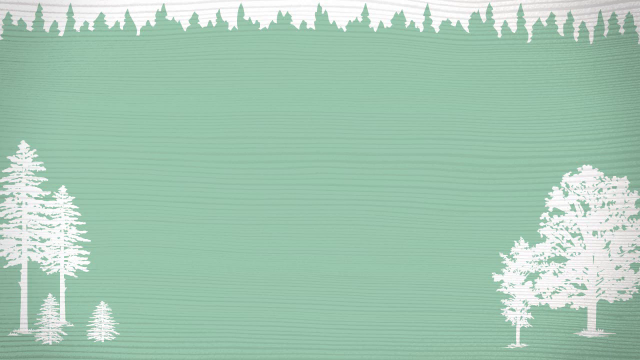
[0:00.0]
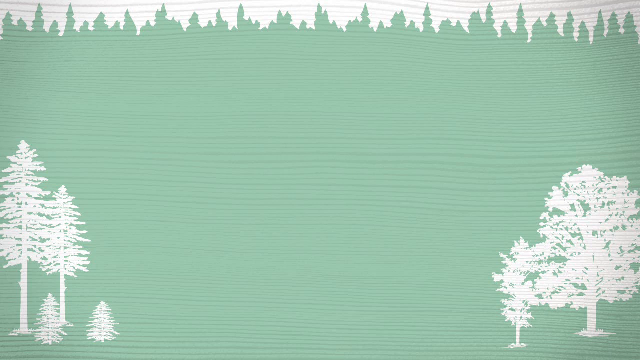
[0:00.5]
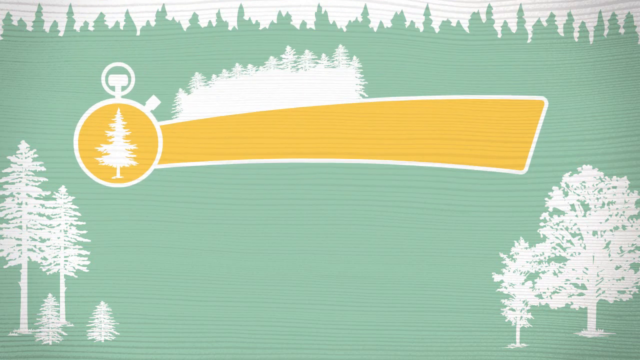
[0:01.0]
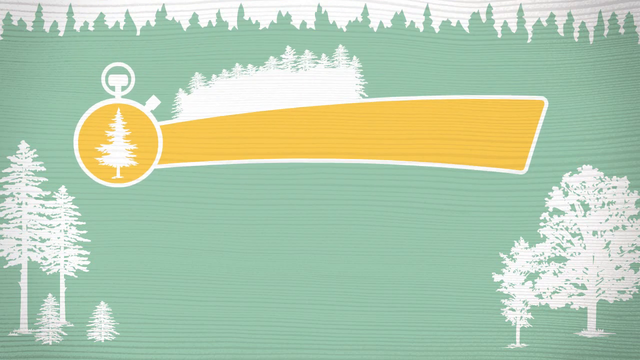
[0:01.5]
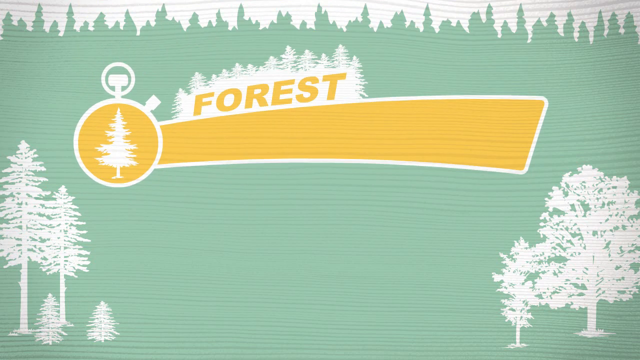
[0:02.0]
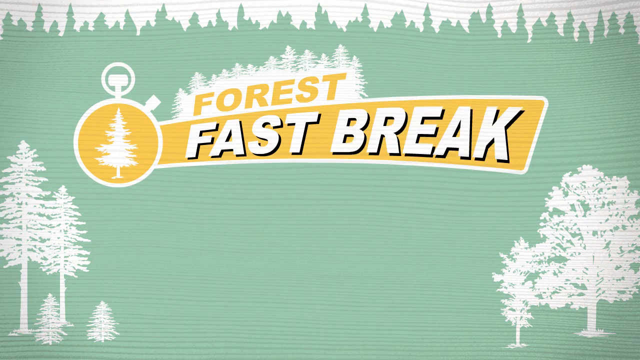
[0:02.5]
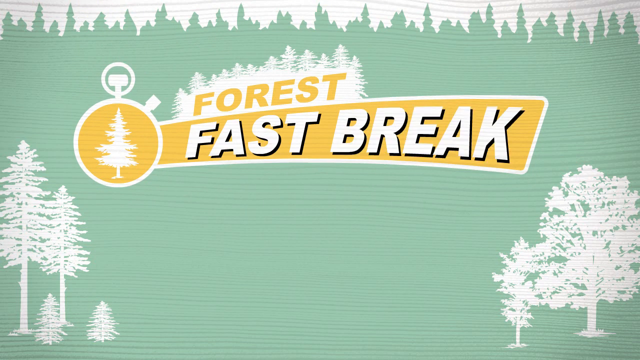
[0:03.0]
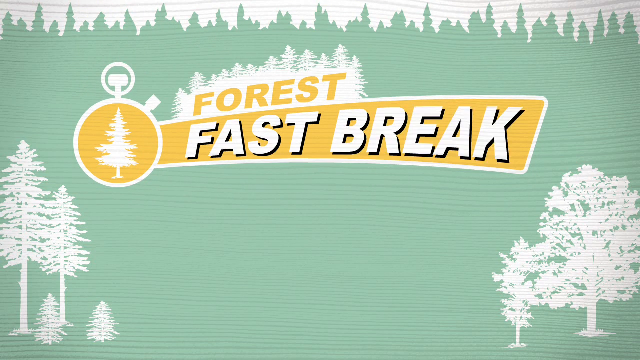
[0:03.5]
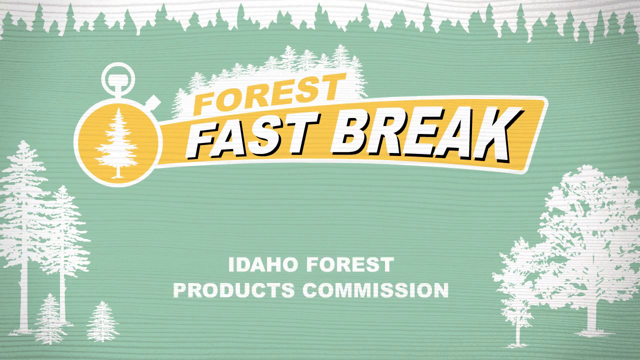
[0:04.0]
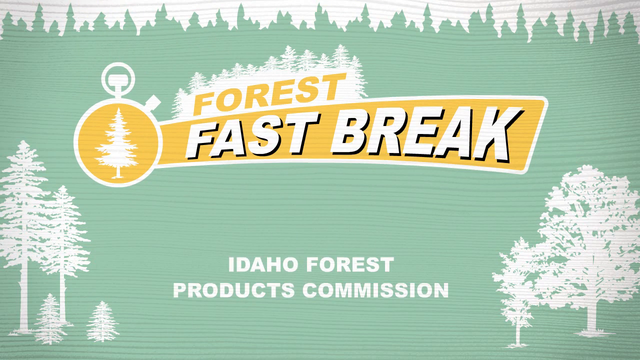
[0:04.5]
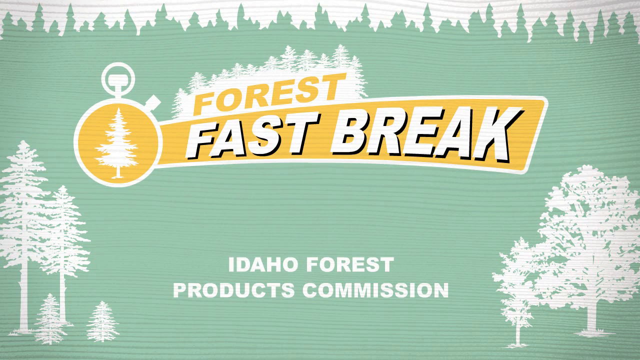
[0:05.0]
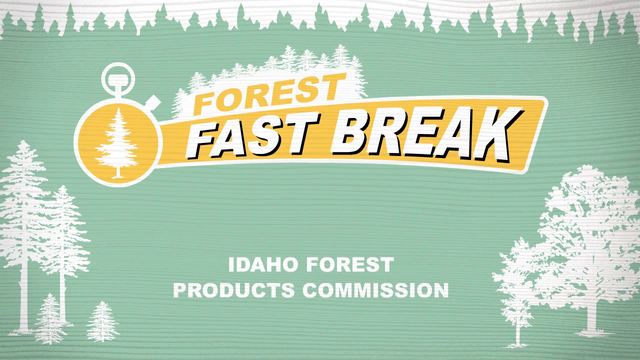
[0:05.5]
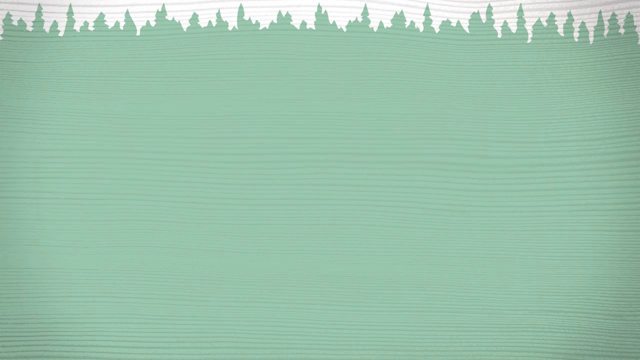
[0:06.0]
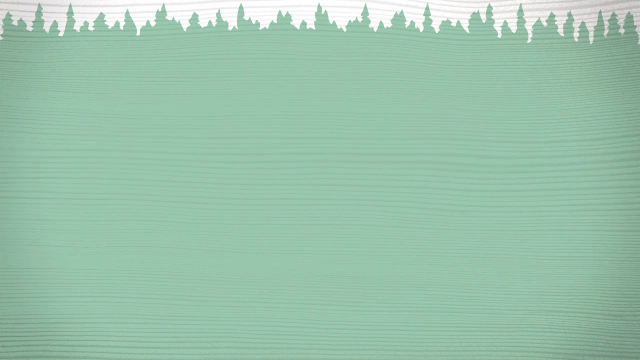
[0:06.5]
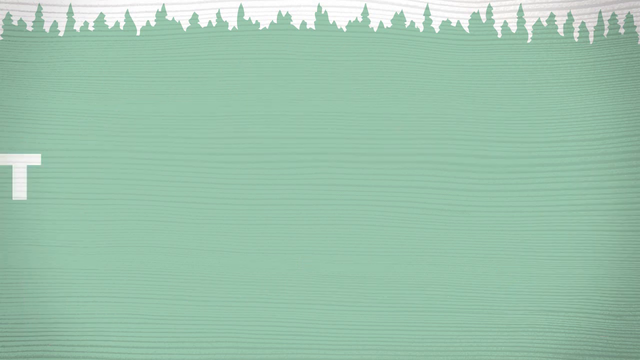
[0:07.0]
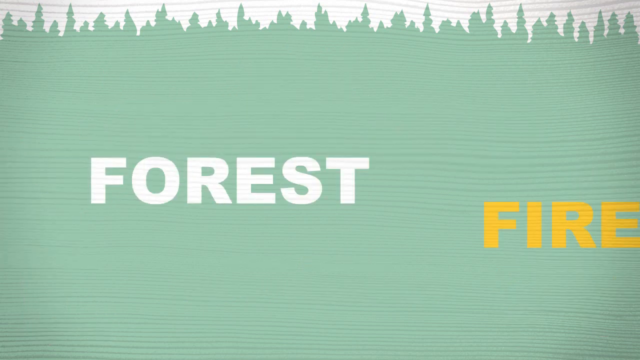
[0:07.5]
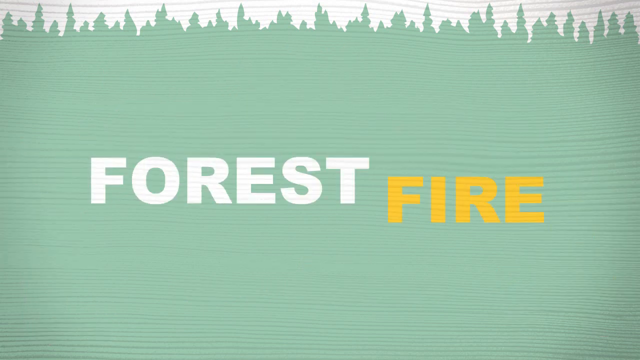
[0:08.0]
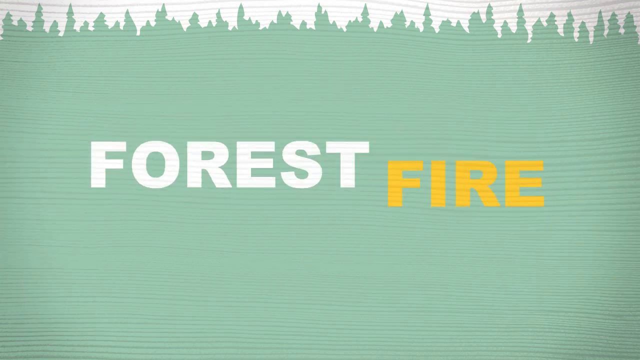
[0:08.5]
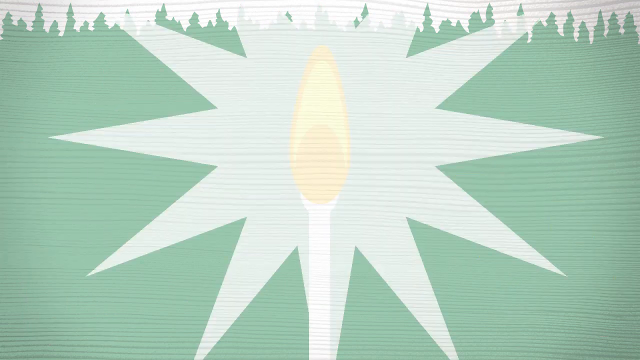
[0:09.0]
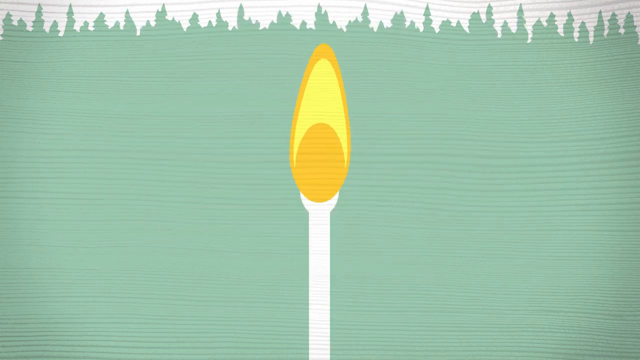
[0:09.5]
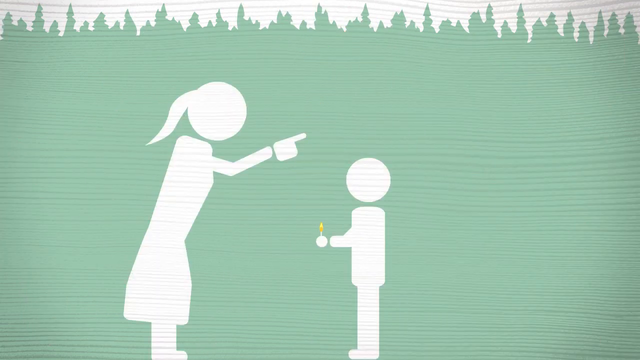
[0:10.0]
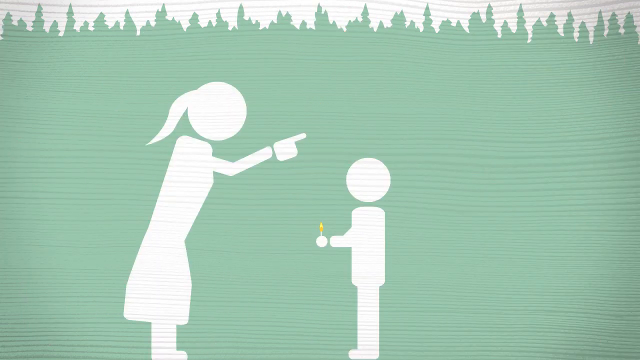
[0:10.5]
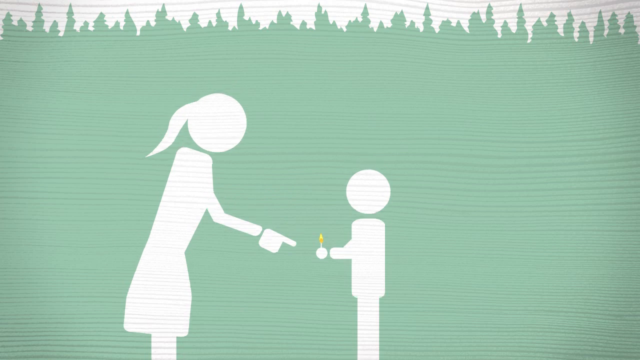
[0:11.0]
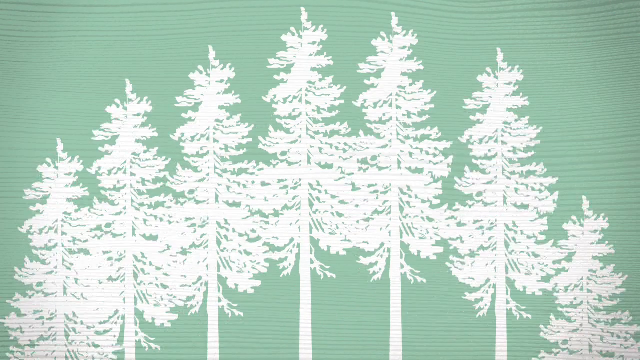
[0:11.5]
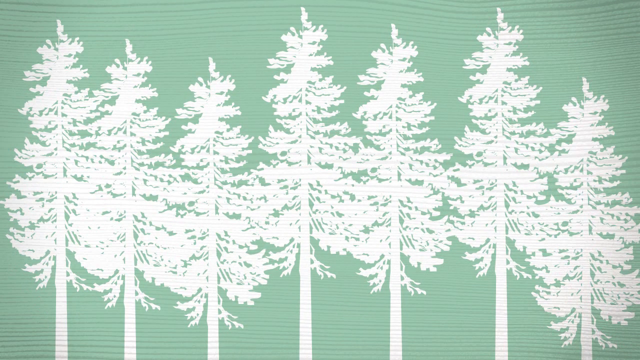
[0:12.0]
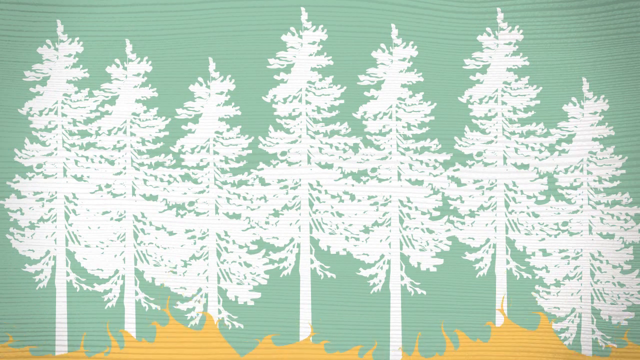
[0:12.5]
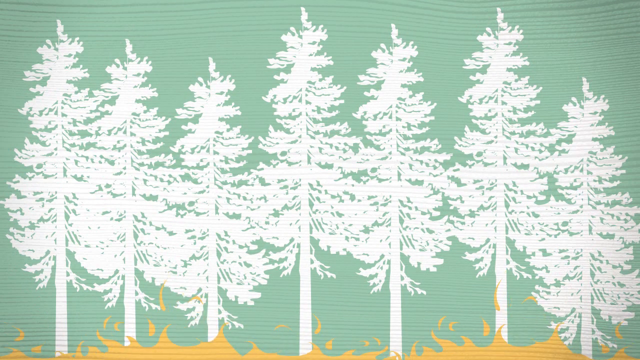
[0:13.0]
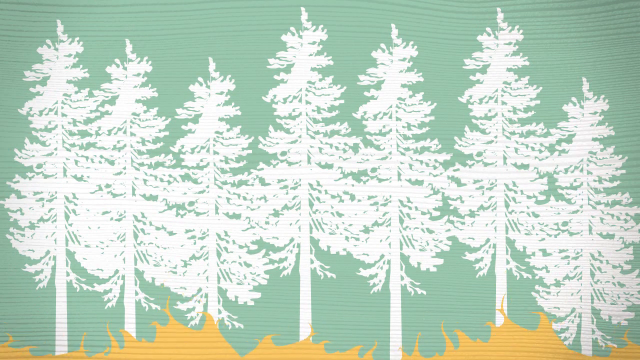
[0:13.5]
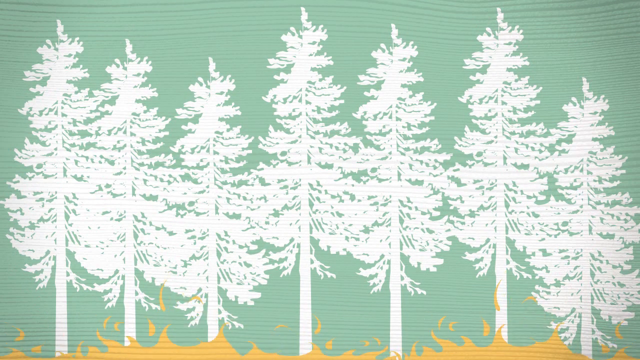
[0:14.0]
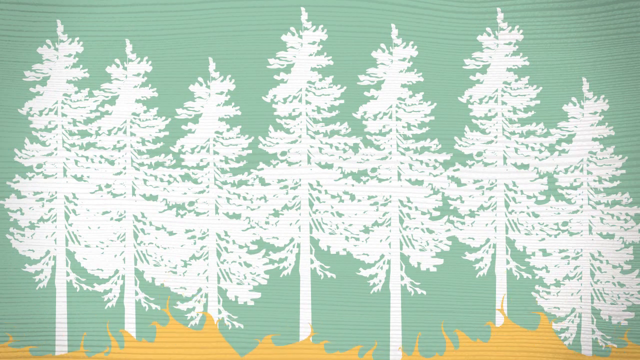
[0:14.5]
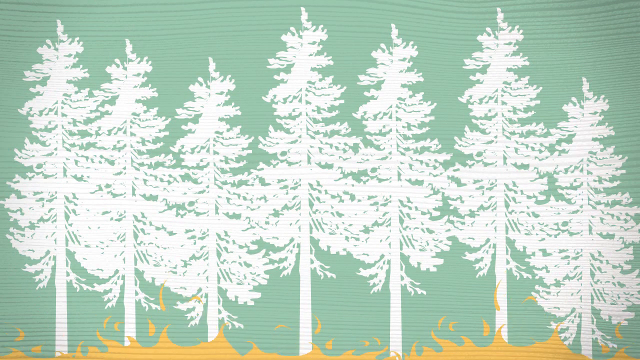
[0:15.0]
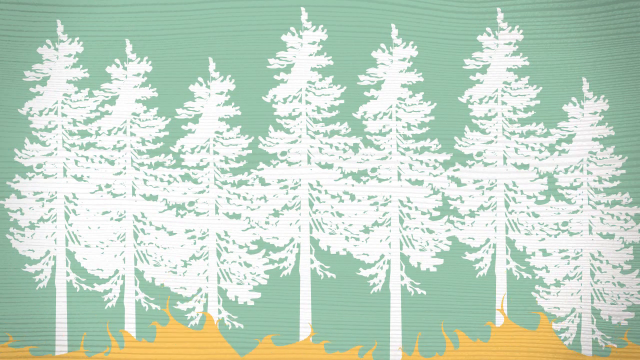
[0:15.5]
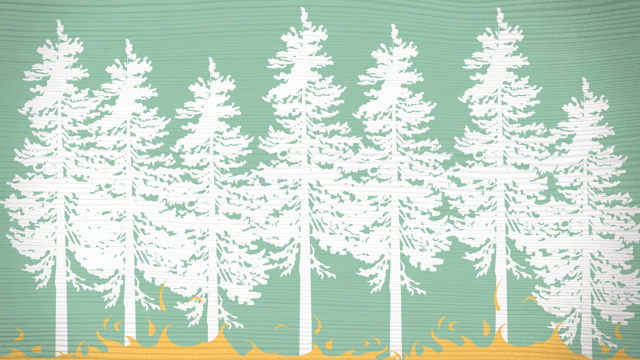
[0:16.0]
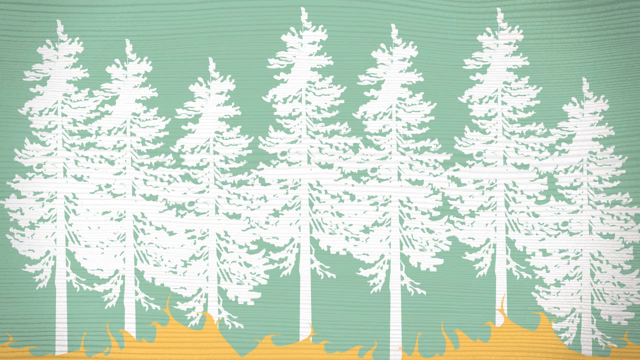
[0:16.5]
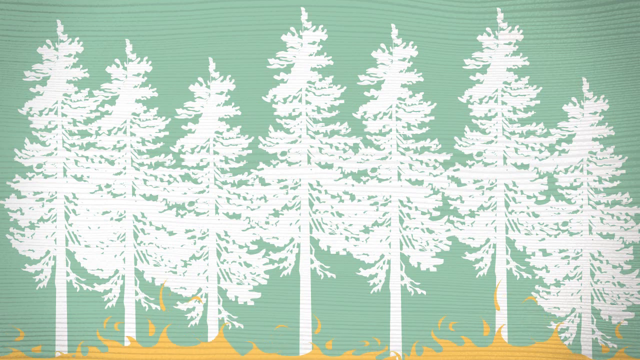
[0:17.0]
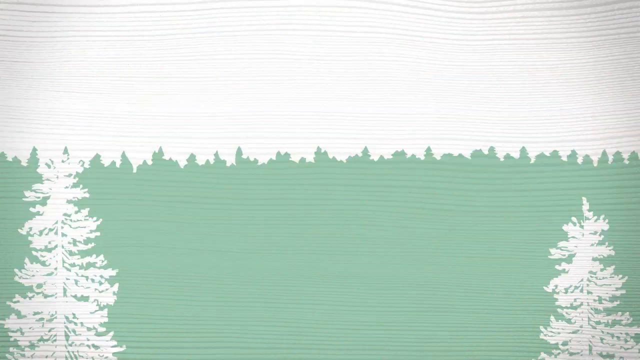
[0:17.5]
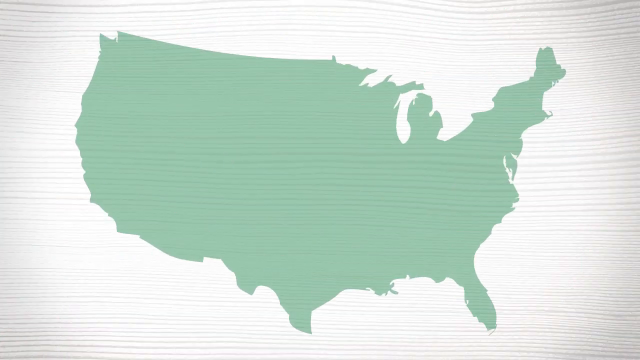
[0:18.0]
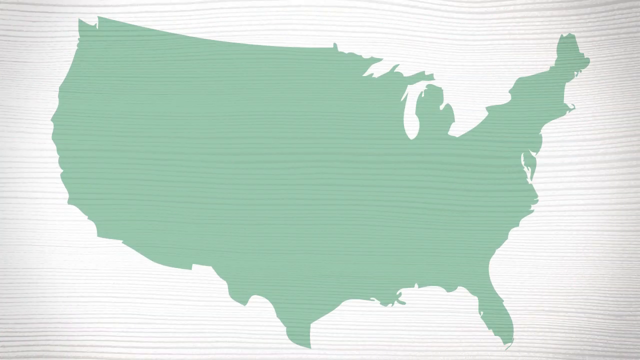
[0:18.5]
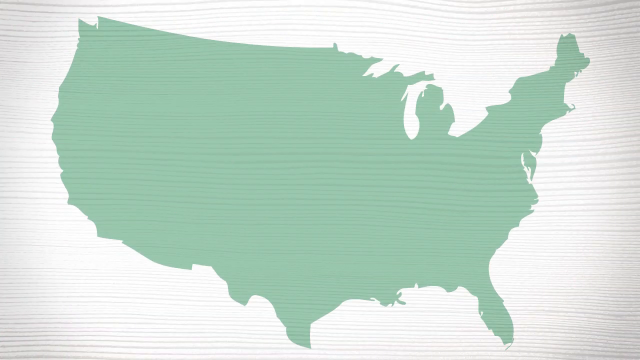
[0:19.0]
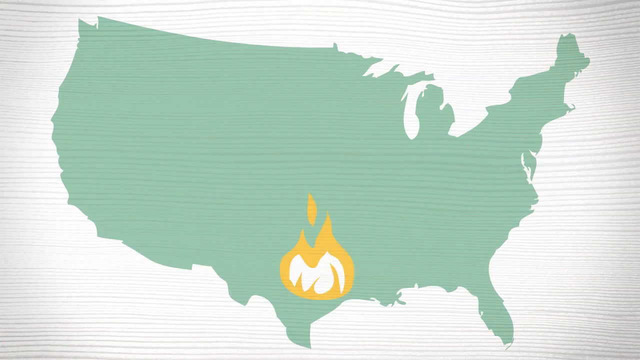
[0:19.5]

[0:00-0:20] A teal, forest-inspired background opens the video; the very top appears to be trees, and there are trees in the right and left corners. A timer appears with the text "Forest Fast Break" and "Idaho Forest Product Commission." The text "Forest Fire" follows, and a matchstick is lit. The match is in a child's hand, and his mother is scolding him. Next come some trees with fire rising up at the bottom. A map of the North American continent appears, and little fires begin to pop up in places all over it. The color scheme stays teal green, teal blue, and white.